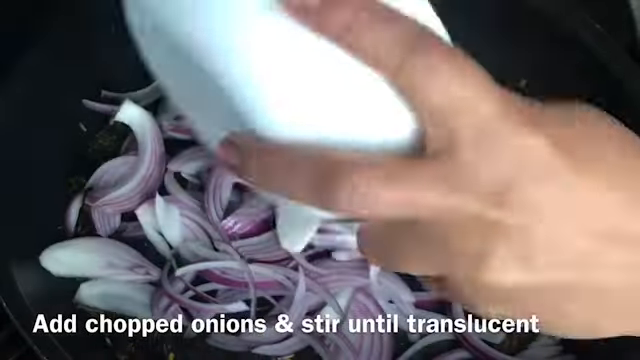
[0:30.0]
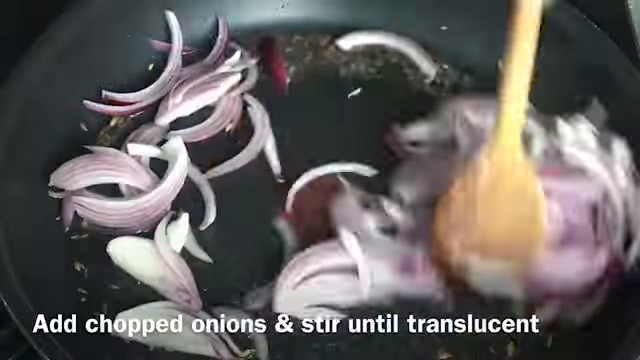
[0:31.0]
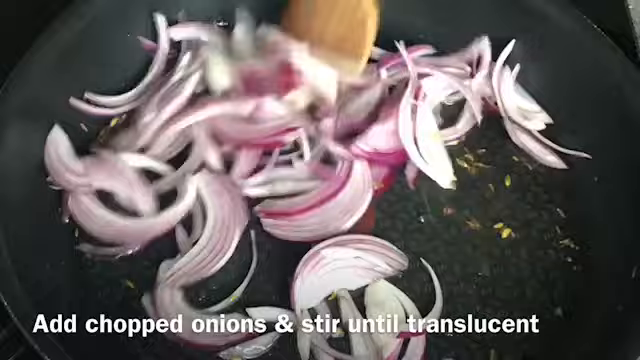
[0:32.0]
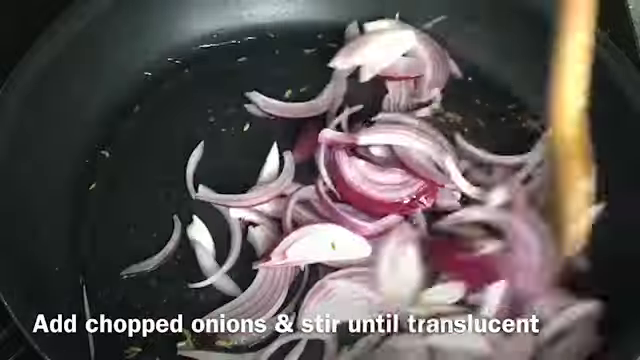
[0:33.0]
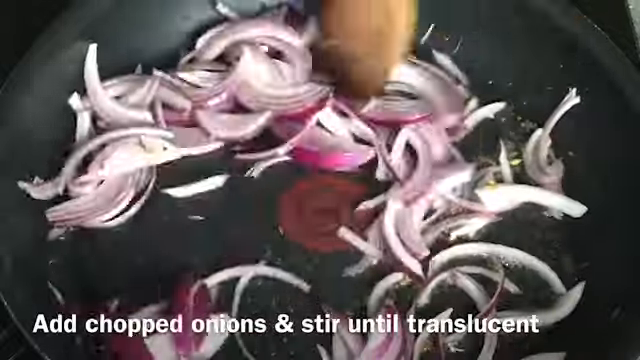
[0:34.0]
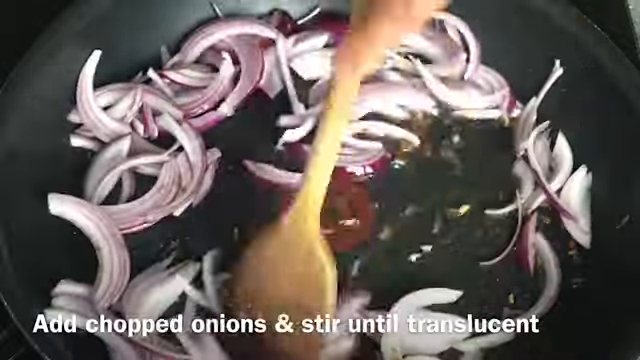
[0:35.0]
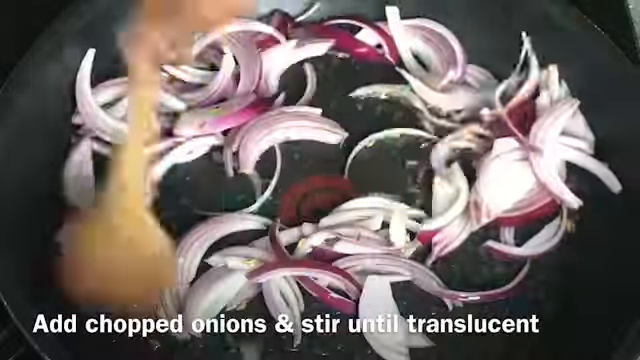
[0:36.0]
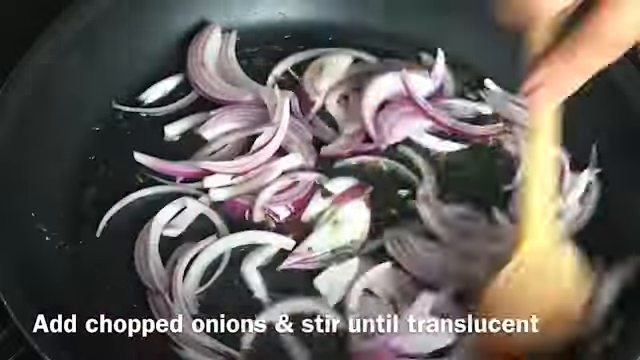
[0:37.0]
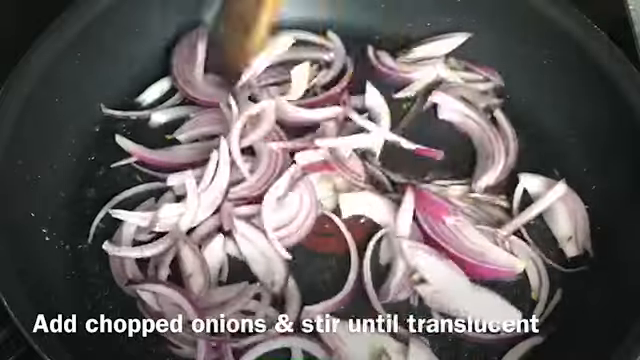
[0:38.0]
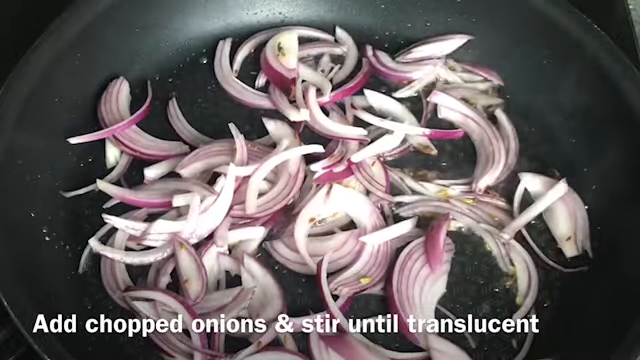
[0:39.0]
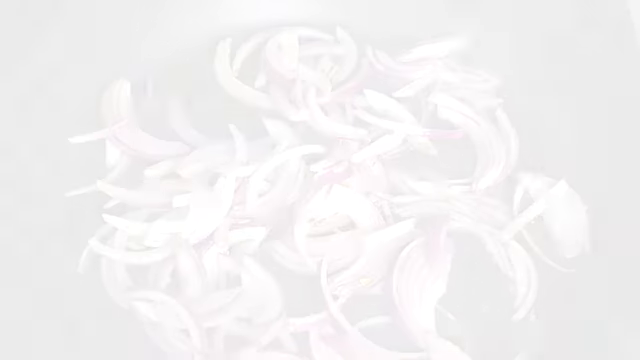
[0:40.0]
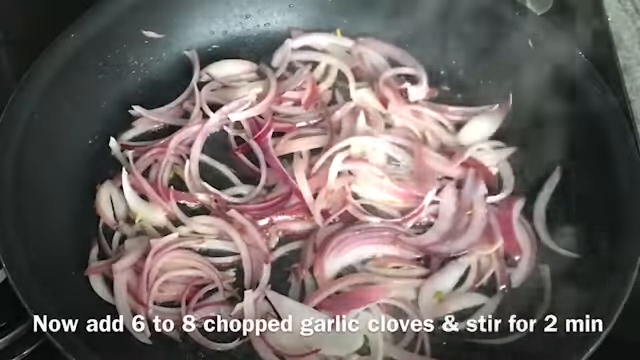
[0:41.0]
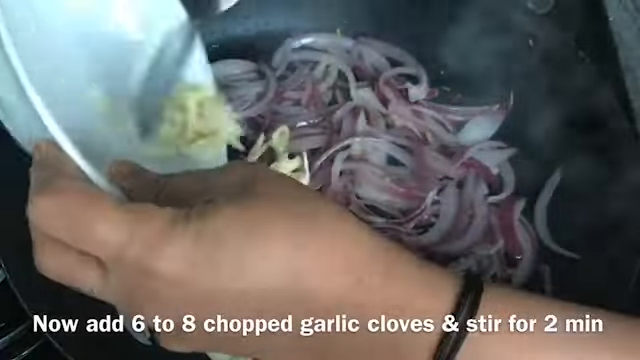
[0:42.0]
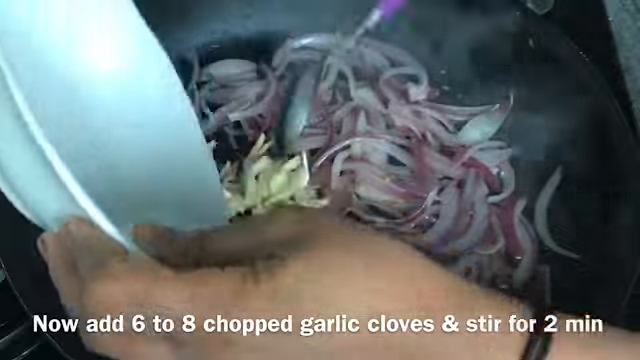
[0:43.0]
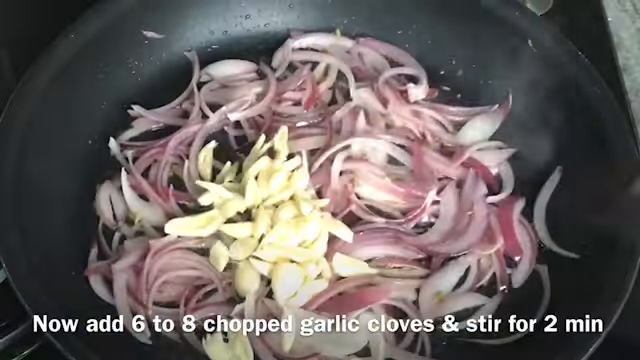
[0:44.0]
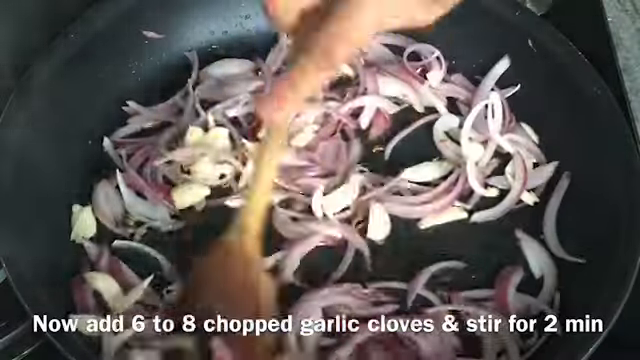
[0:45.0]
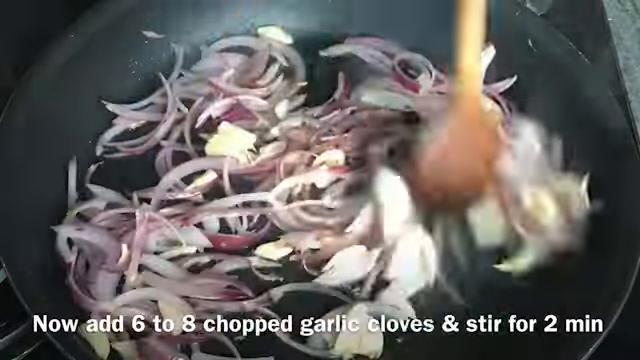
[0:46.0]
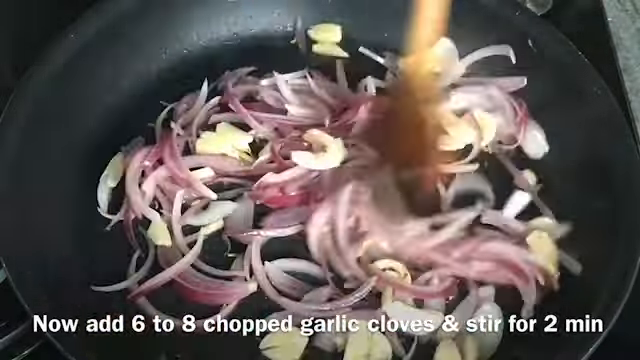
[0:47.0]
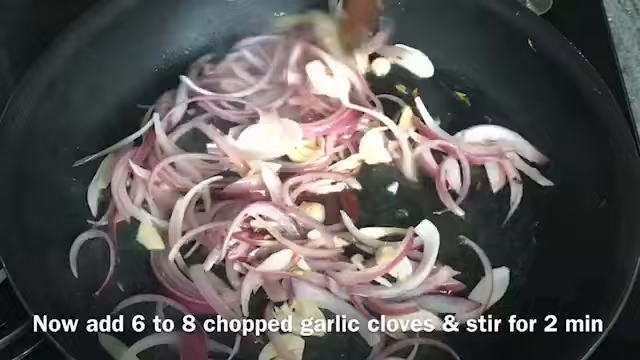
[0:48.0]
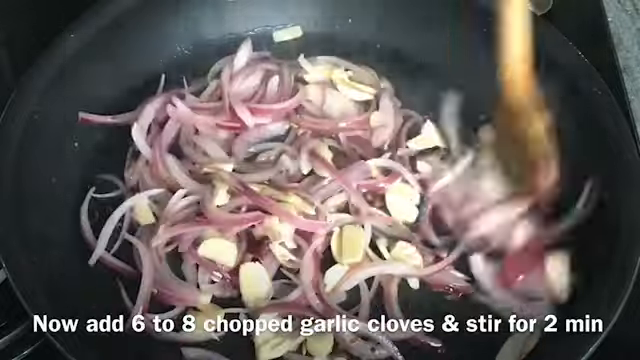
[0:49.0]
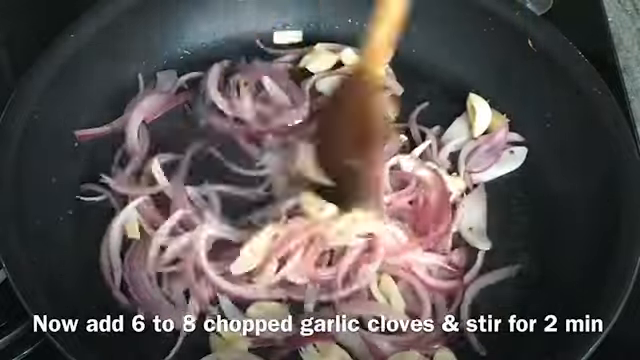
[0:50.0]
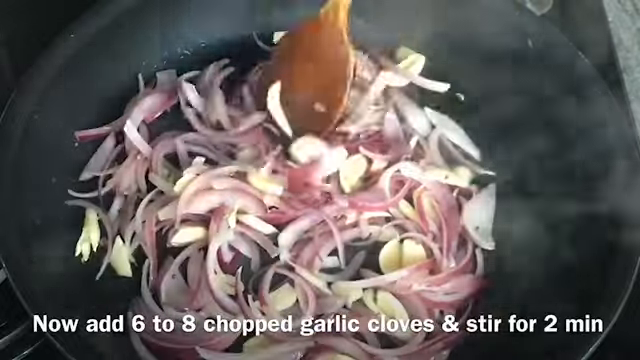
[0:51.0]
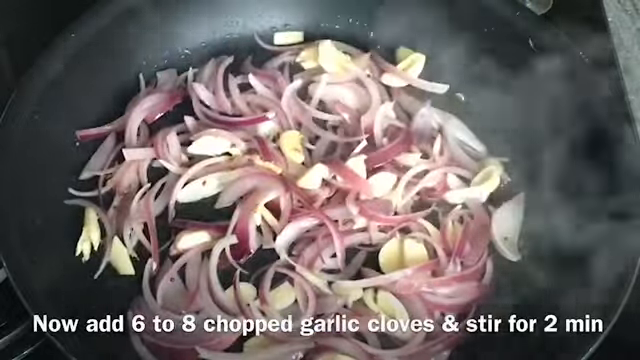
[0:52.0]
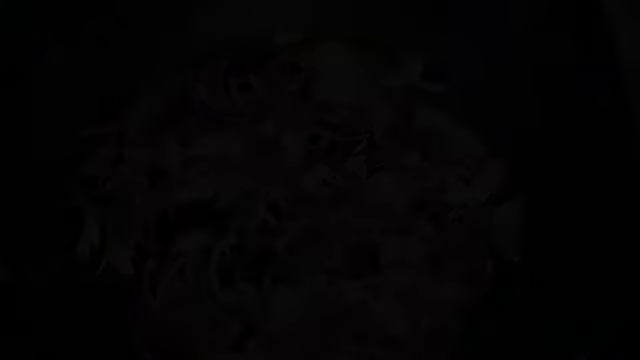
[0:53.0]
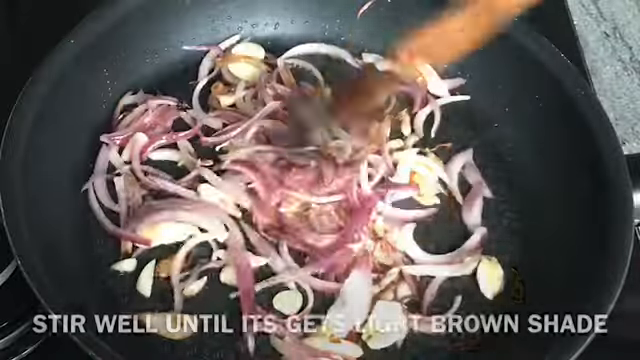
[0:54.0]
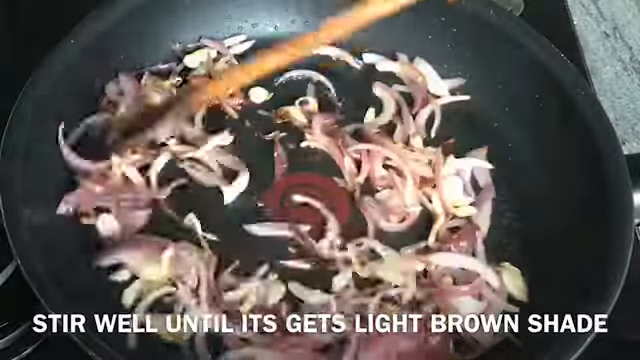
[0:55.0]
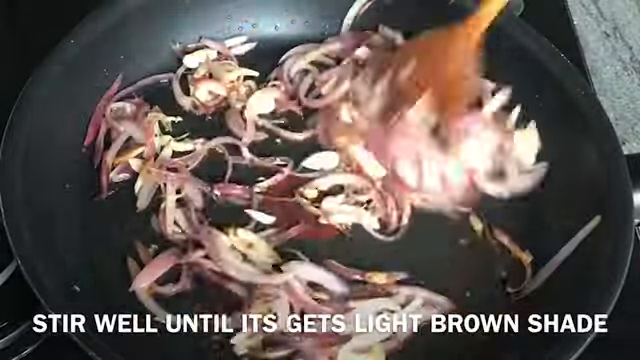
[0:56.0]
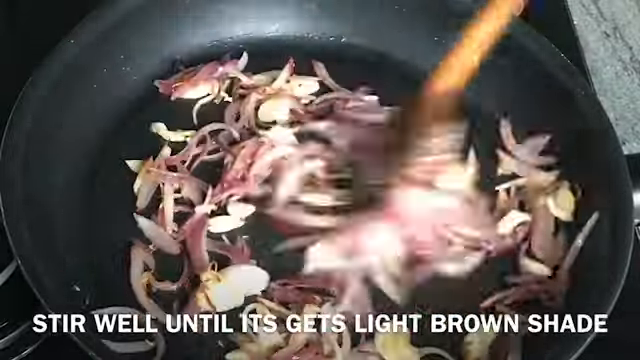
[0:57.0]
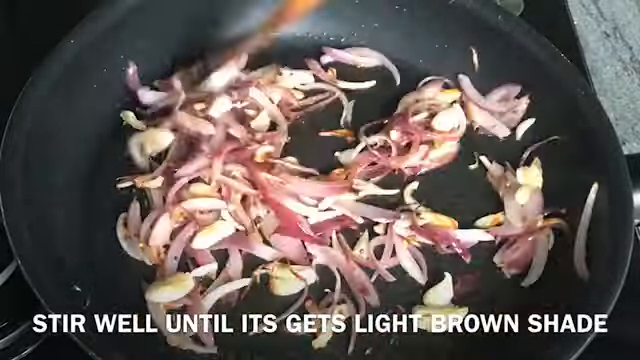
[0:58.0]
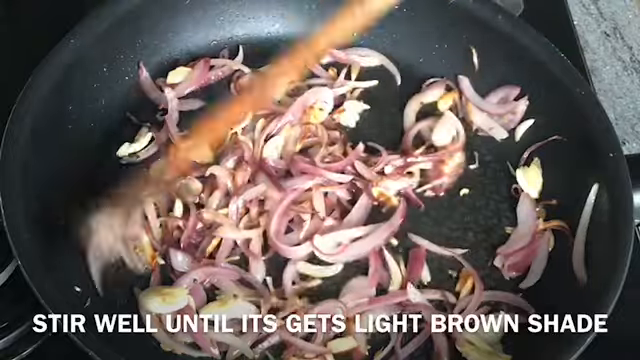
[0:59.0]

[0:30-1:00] The red onion has been poured from a white bowl into the black frying pan and is stirred around with a wooden spoon, while text reads "Add chopped onions and stir until translucent." The onions look like they were cut in half and then sliced. They are stirred back and forth, kind of in a crisscross pattern, and steam rises. The wooden spoon is kind of a light brown with some dark brown at the end. Six to eight chopped garlic cloves are added from a white bowl, scooped into the pan with a regular metal spoon, and stirred into the onion, visibly frying. Text reads "Stir well until it gets light brown shade."